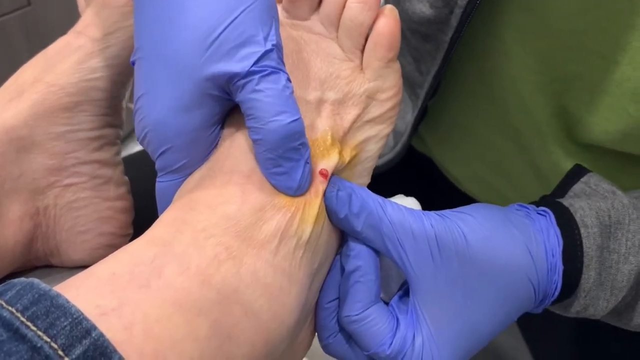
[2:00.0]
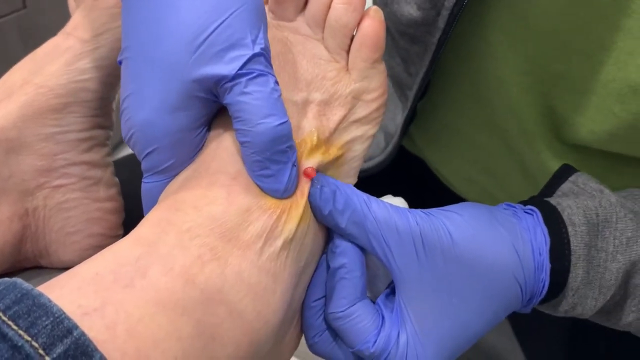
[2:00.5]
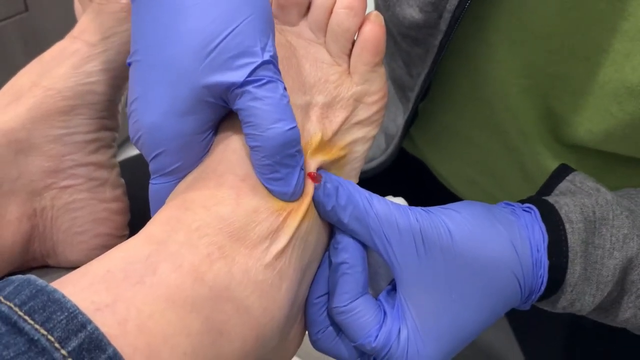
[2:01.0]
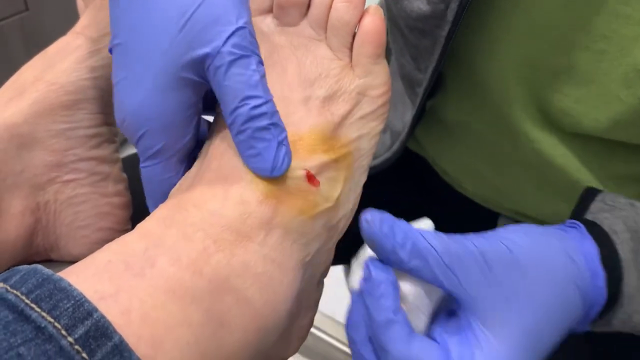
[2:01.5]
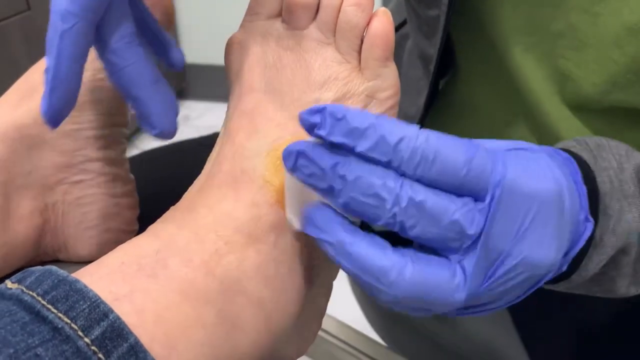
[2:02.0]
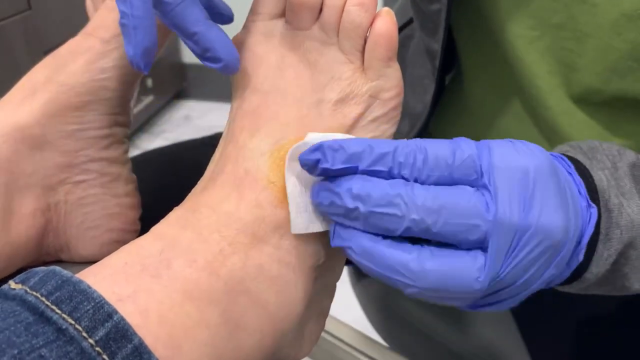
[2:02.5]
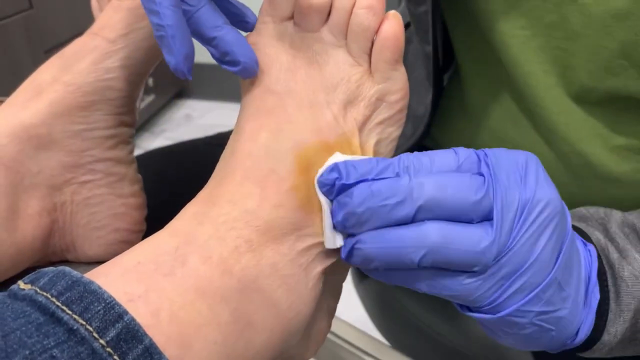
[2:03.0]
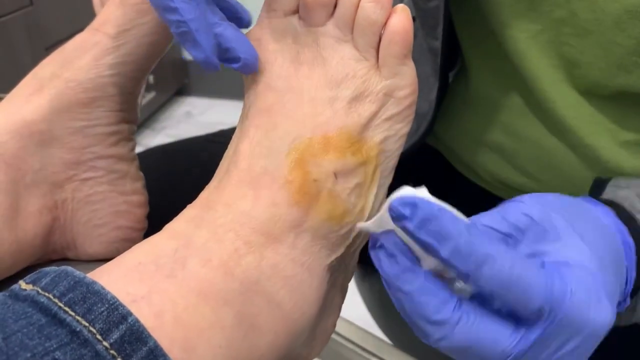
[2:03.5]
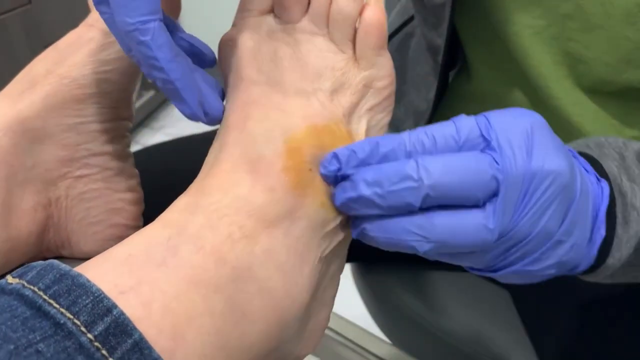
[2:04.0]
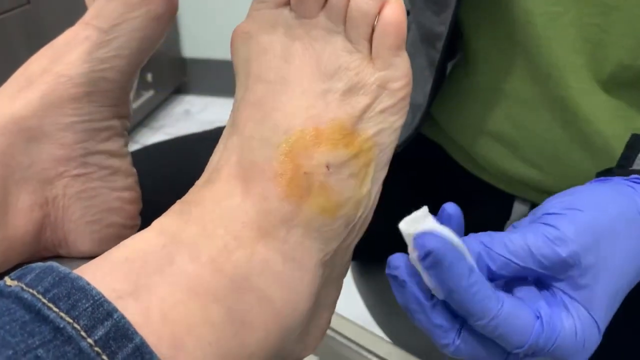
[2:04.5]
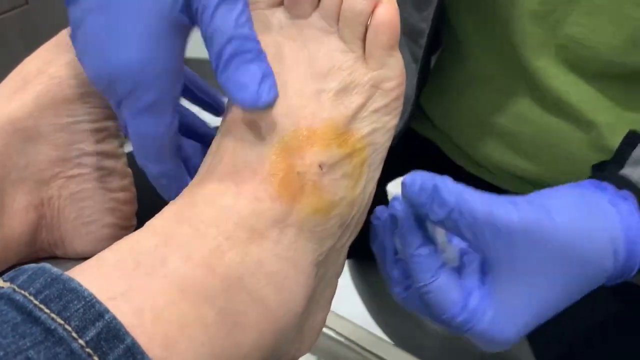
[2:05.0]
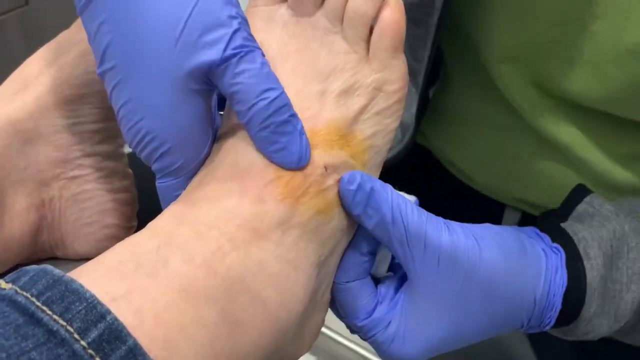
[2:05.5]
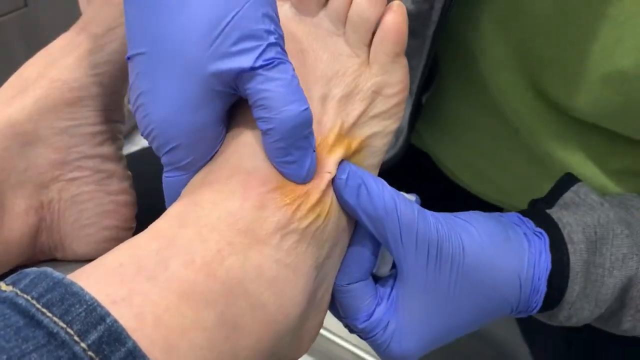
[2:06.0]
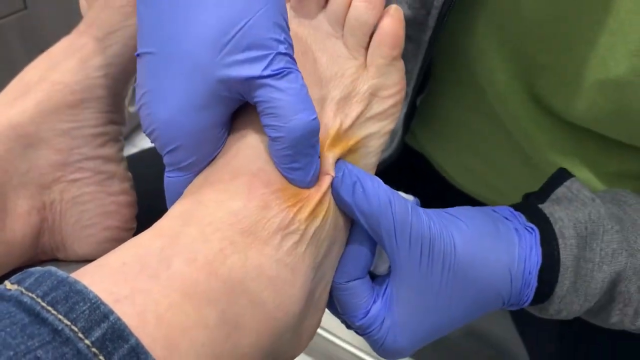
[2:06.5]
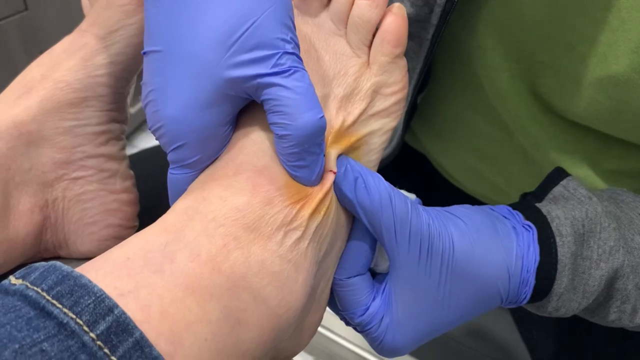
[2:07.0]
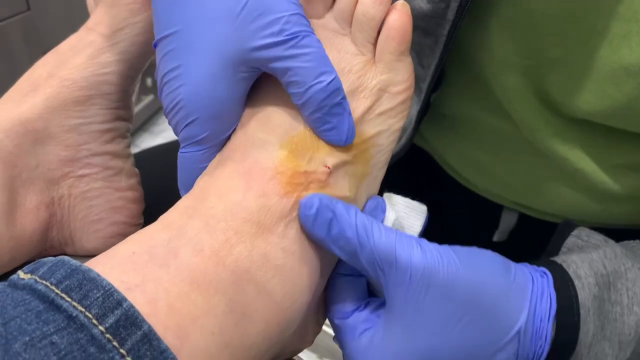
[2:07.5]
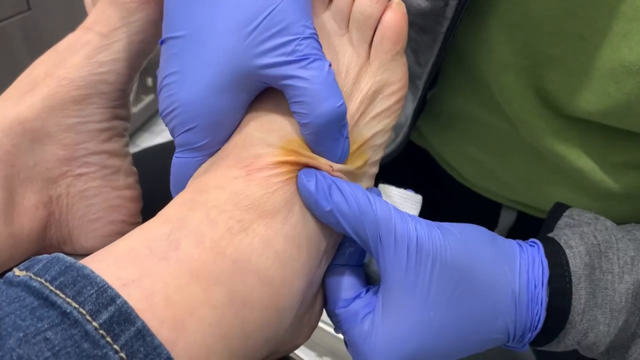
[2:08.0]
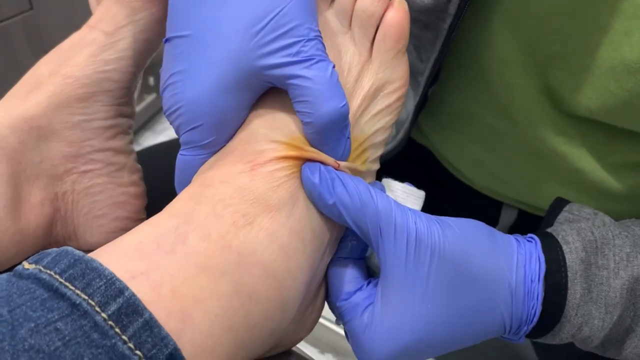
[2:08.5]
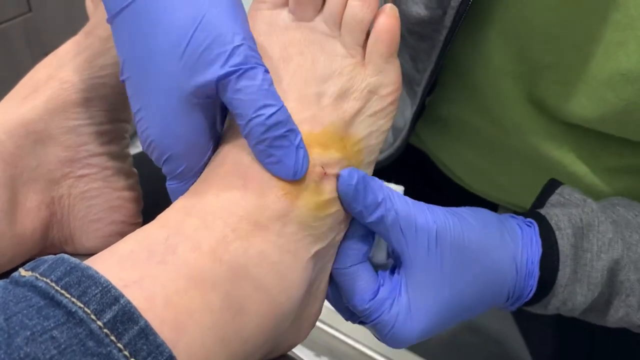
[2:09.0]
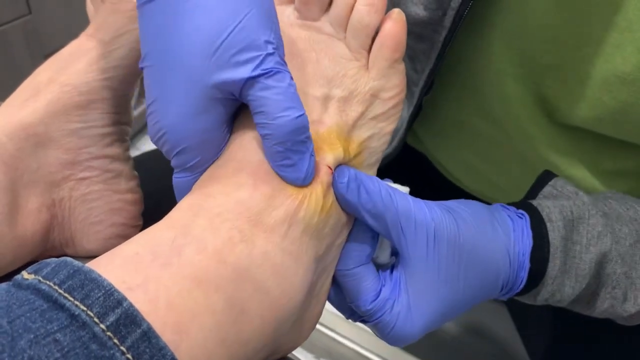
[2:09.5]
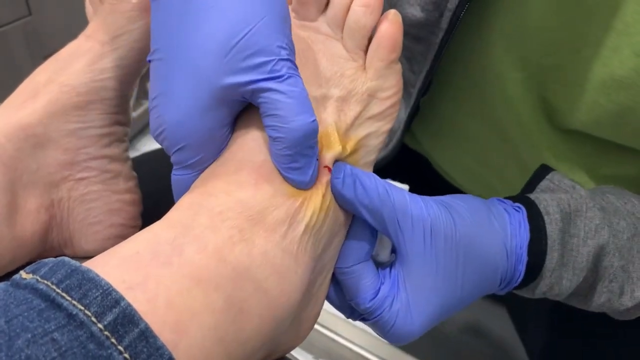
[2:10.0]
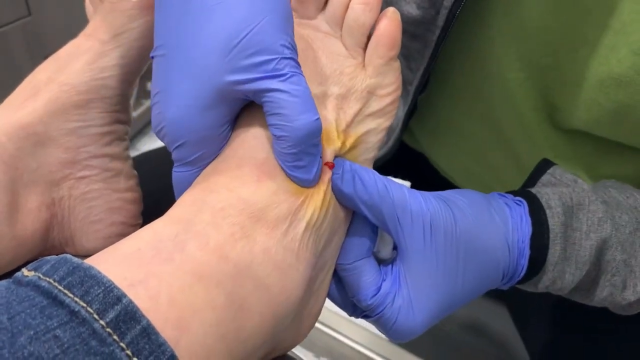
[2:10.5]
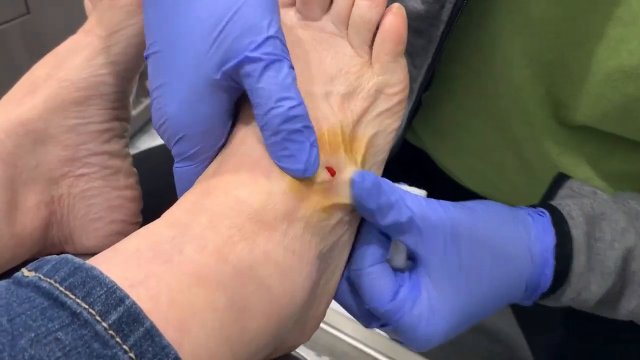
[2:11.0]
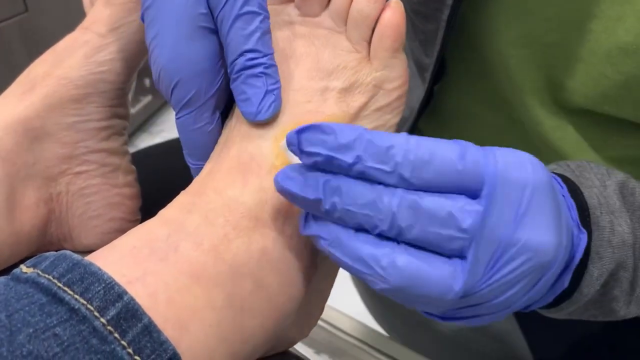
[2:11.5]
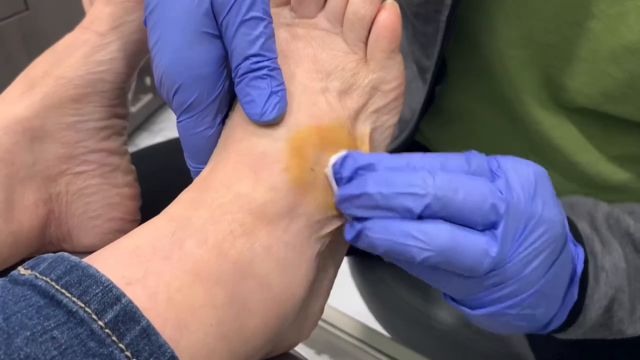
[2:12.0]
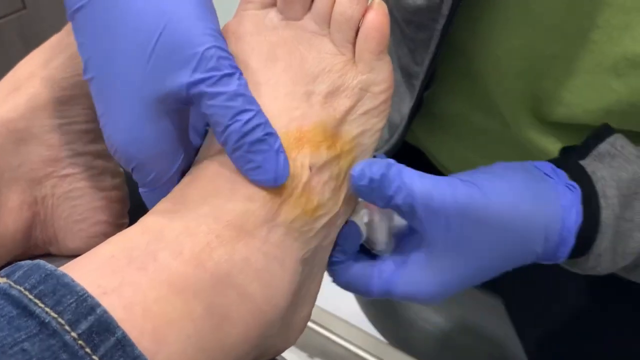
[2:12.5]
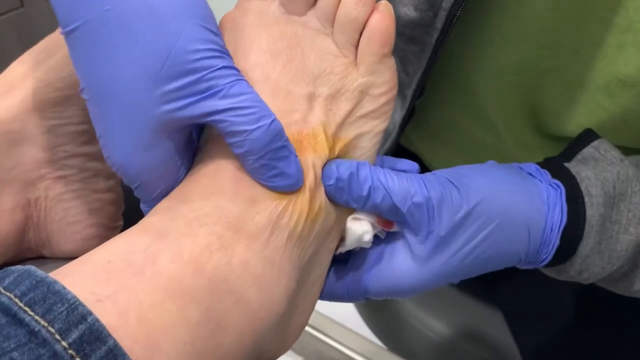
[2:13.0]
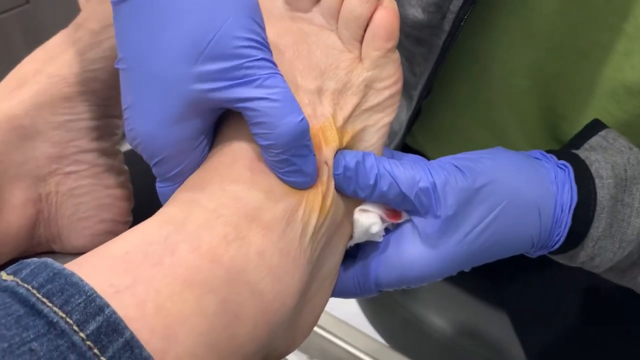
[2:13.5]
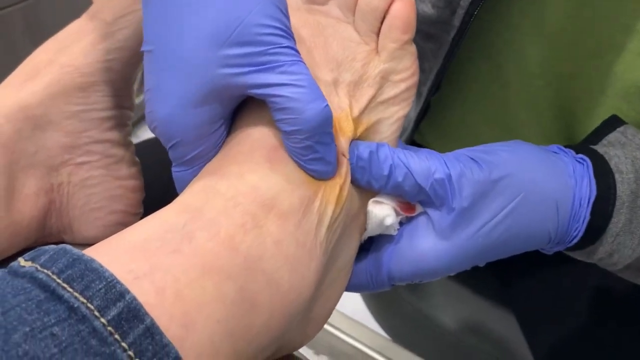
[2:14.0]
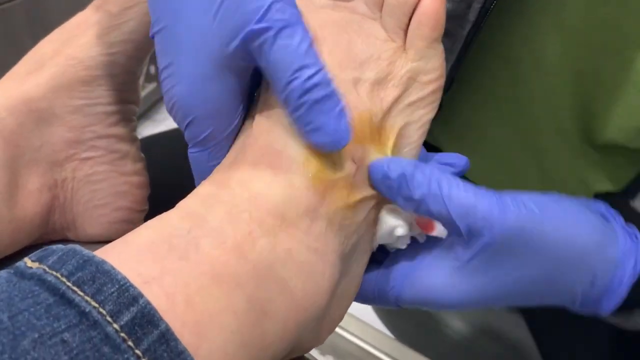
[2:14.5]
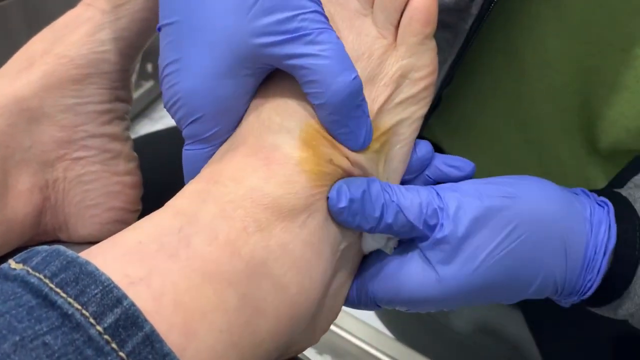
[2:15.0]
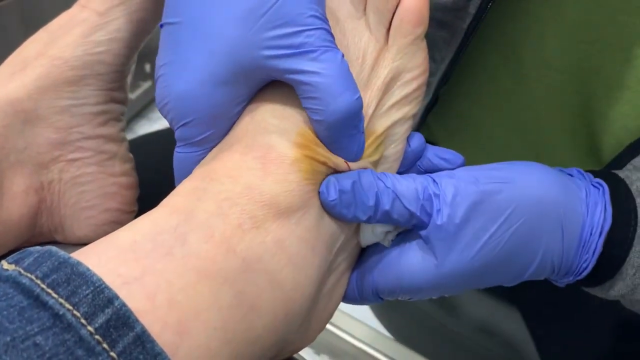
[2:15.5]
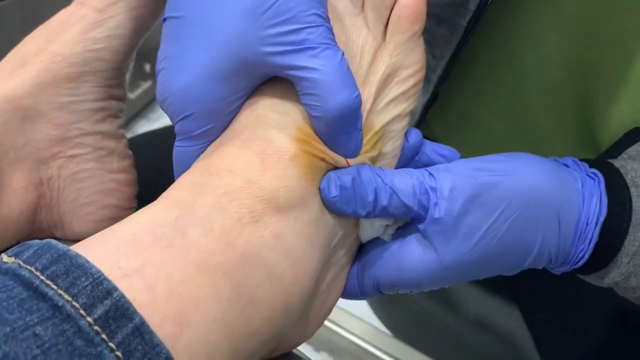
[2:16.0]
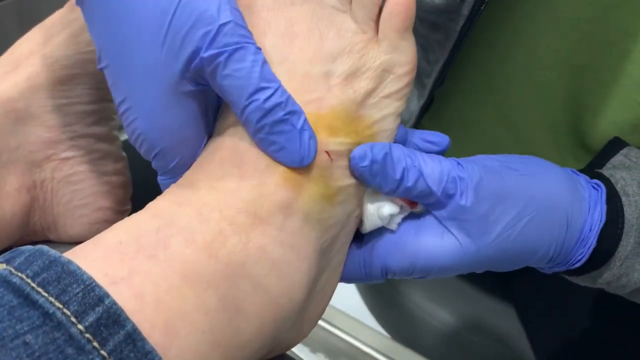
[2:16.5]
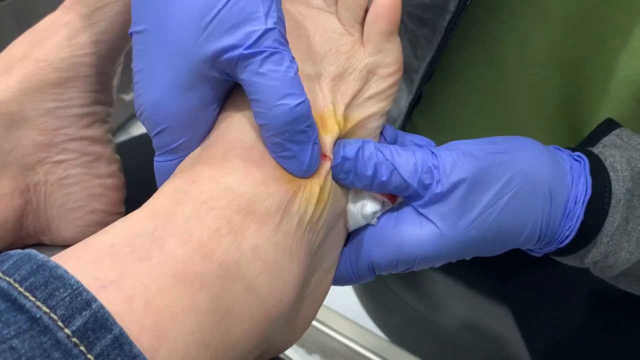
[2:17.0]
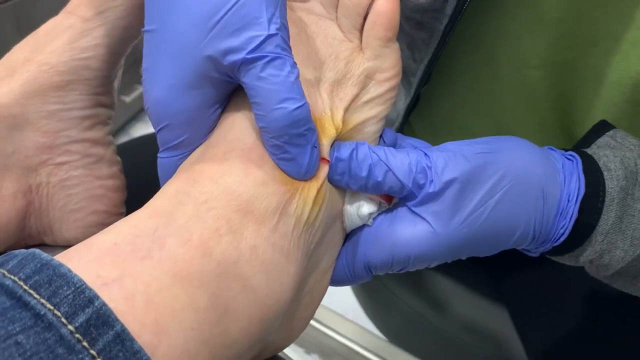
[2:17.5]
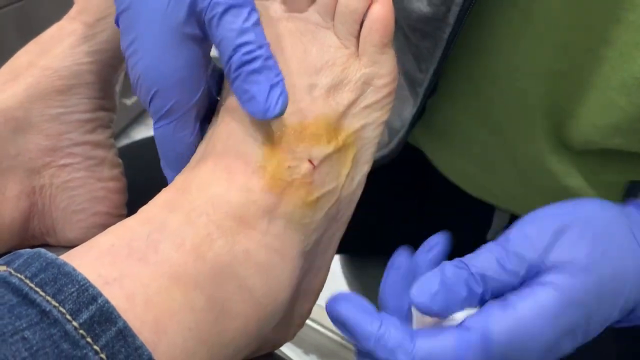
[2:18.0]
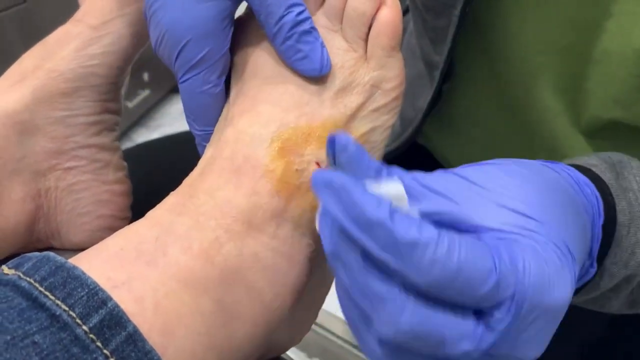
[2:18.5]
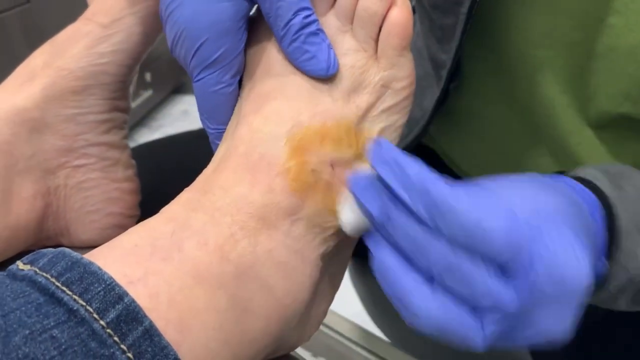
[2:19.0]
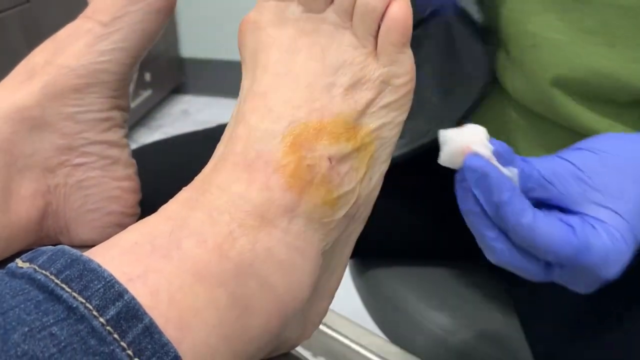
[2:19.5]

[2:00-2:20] A podiatrist wearing blue gloves works on a circular shape on the top of the patient's right foot. Material or pus with a bright coloration and a gel-like consistency comes out of the top of the foot, and the podiatrist squeezes the area to get the pus or gel out.